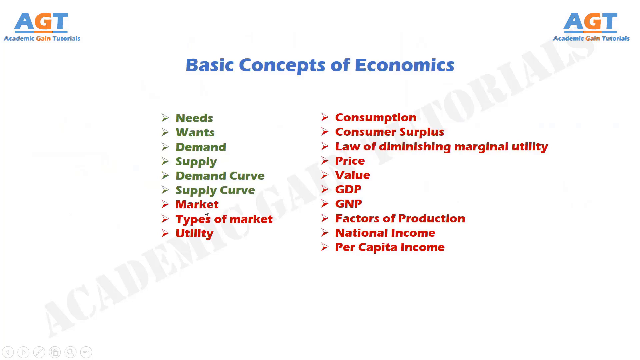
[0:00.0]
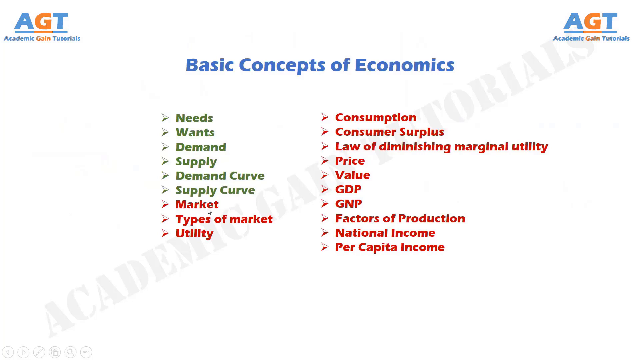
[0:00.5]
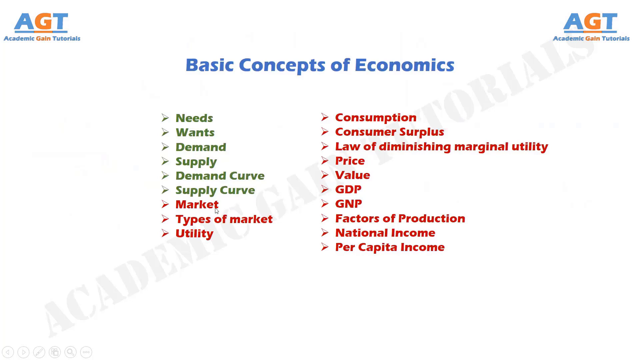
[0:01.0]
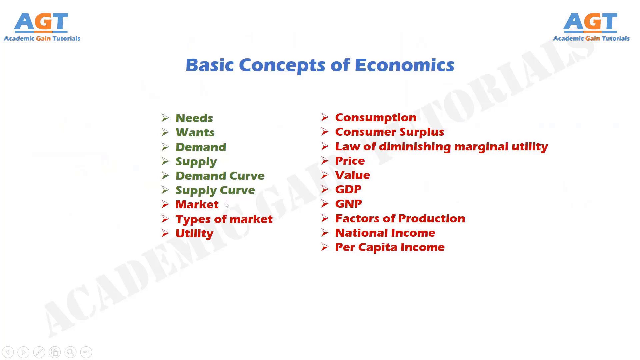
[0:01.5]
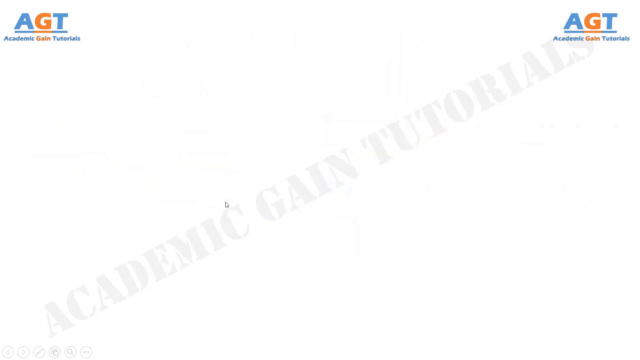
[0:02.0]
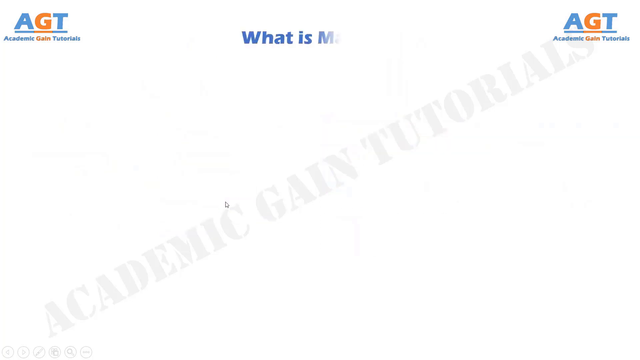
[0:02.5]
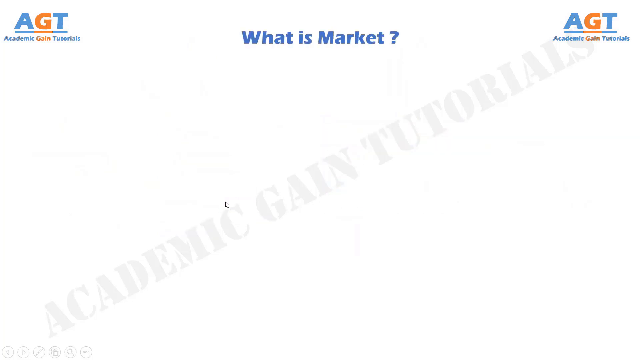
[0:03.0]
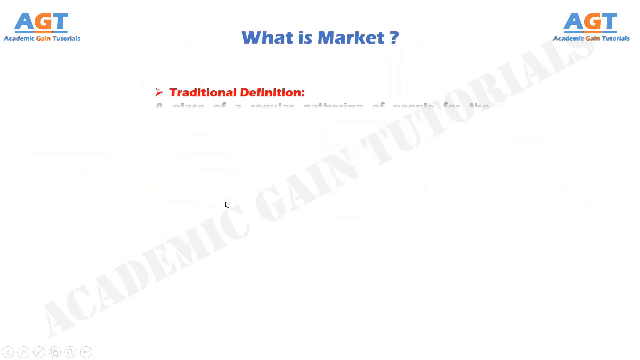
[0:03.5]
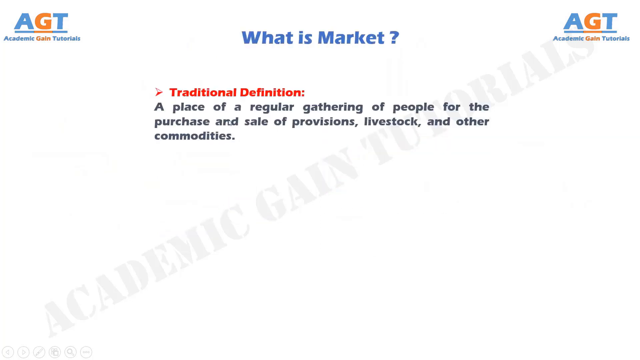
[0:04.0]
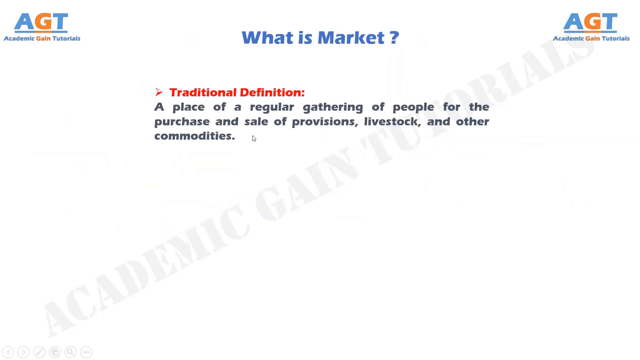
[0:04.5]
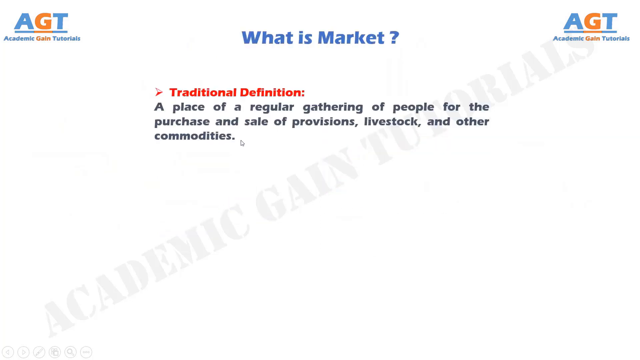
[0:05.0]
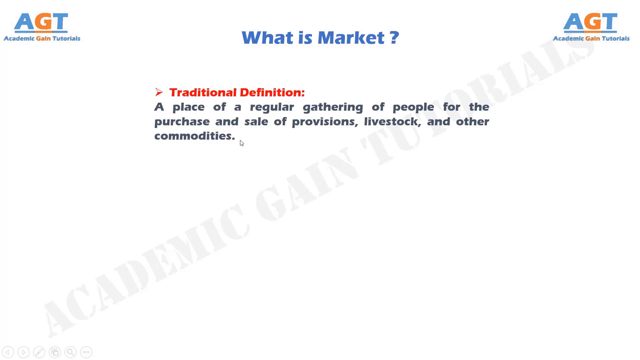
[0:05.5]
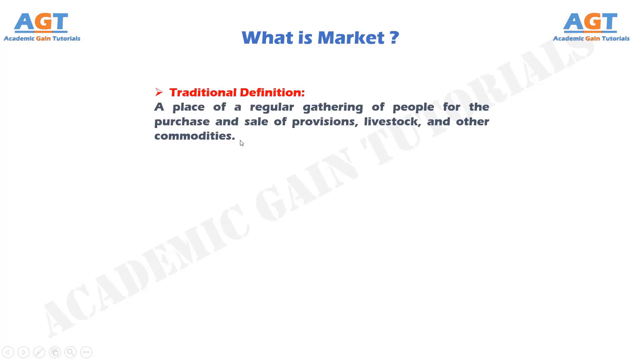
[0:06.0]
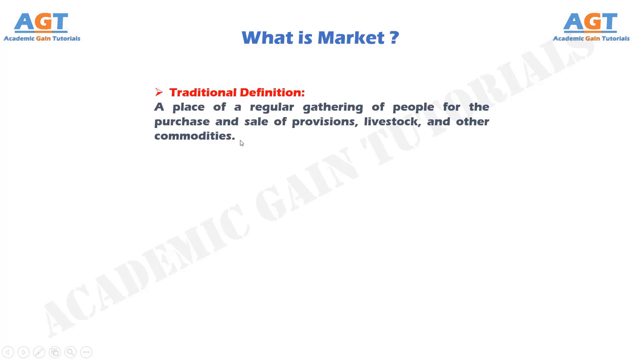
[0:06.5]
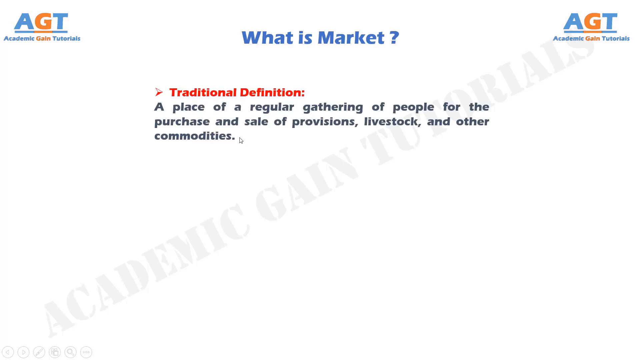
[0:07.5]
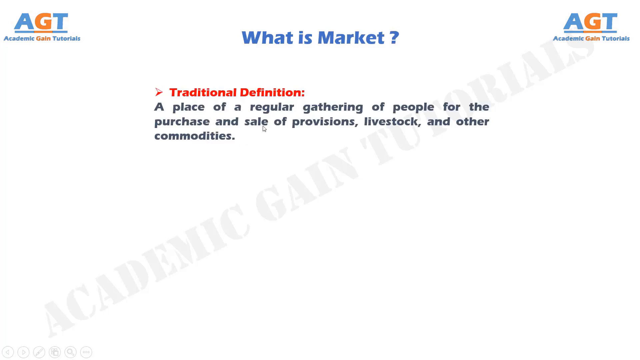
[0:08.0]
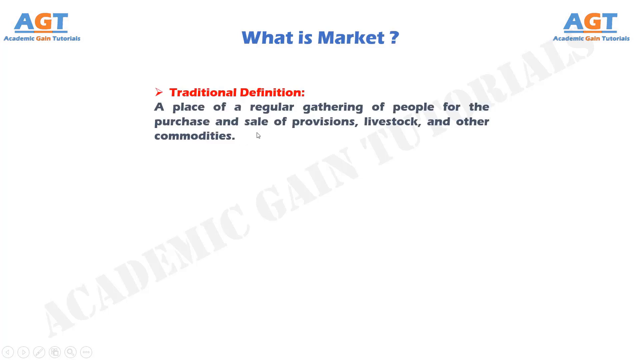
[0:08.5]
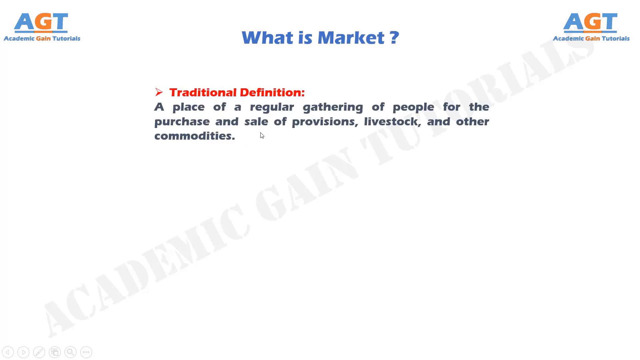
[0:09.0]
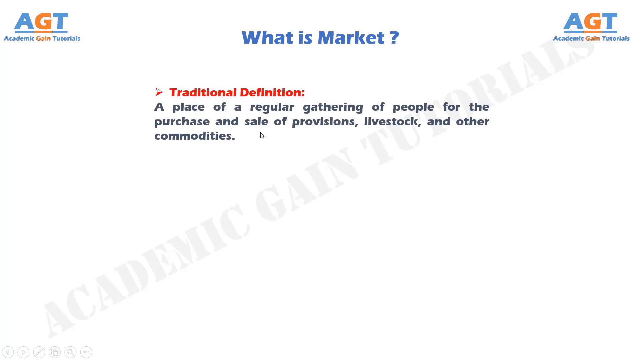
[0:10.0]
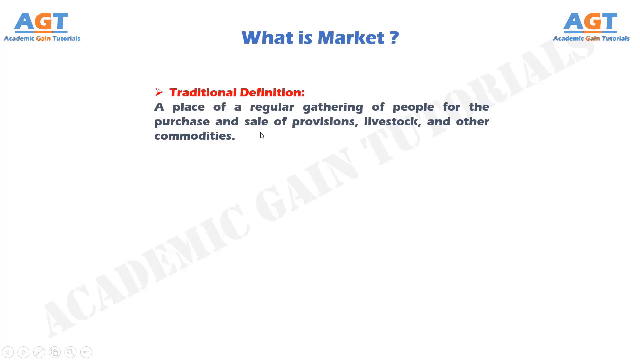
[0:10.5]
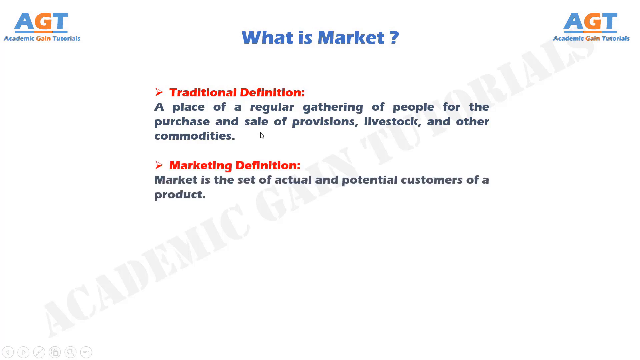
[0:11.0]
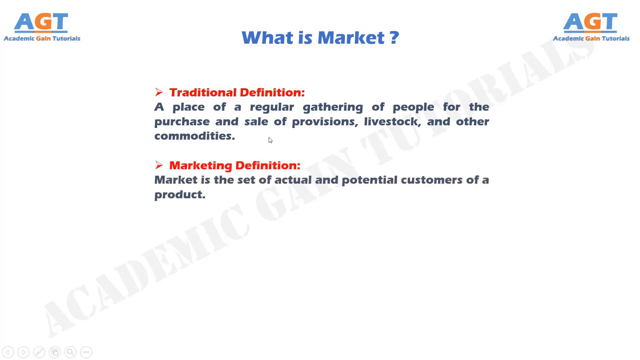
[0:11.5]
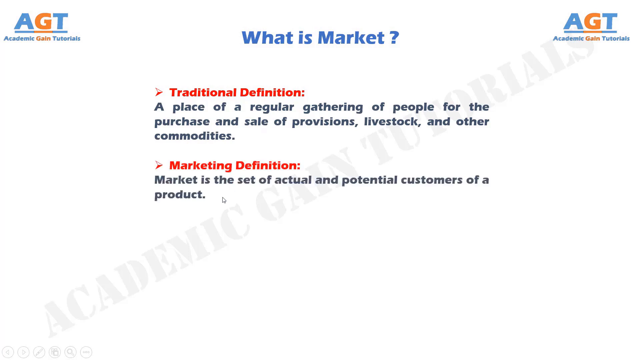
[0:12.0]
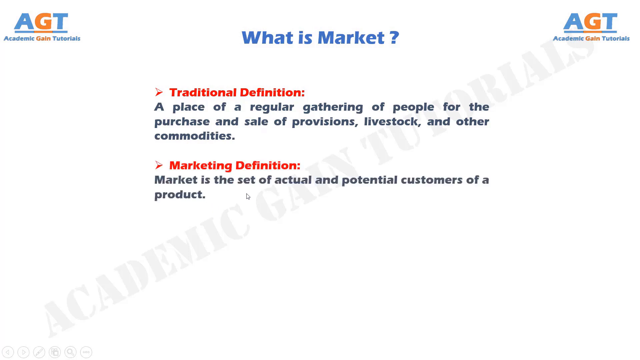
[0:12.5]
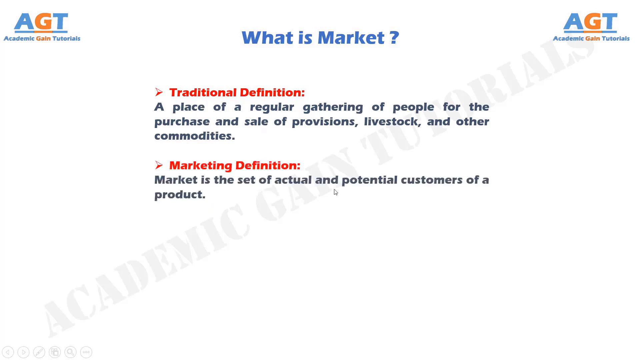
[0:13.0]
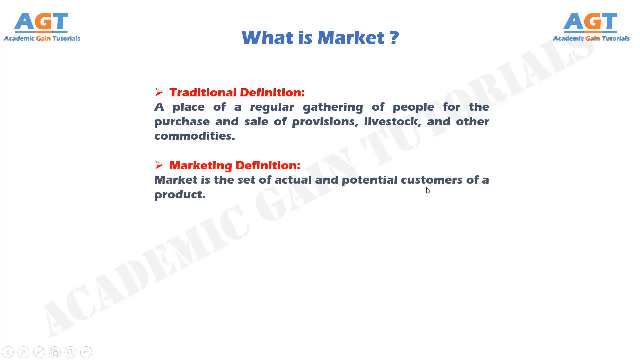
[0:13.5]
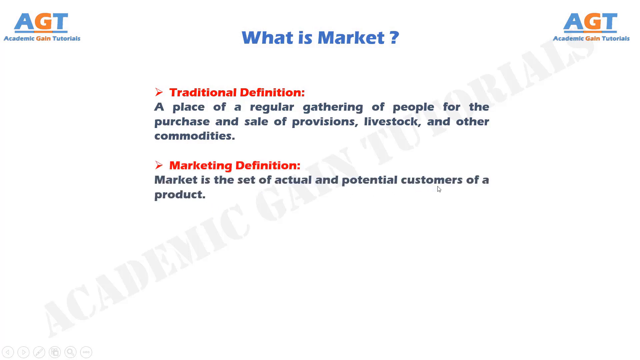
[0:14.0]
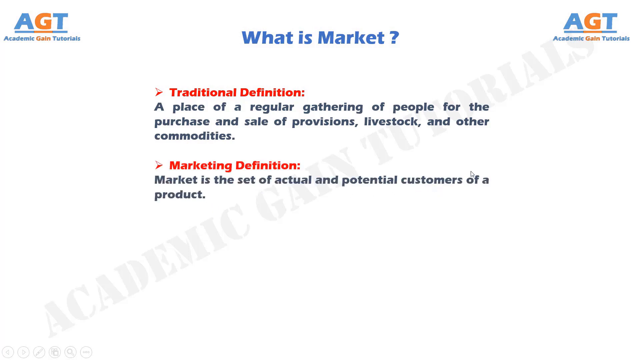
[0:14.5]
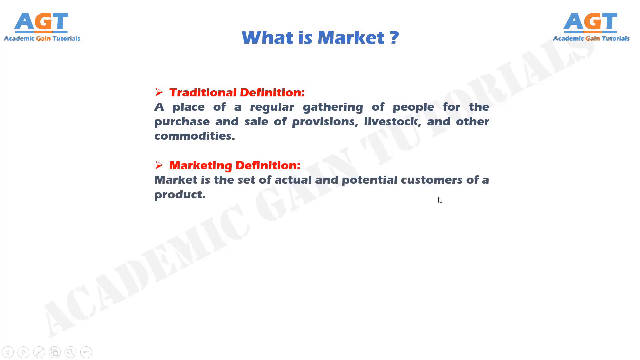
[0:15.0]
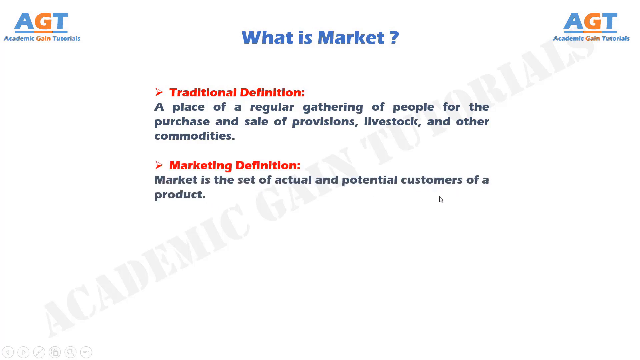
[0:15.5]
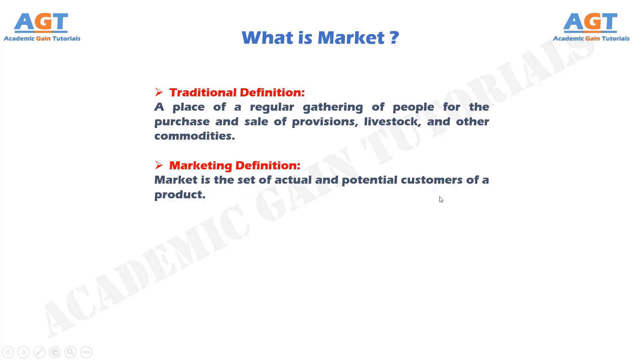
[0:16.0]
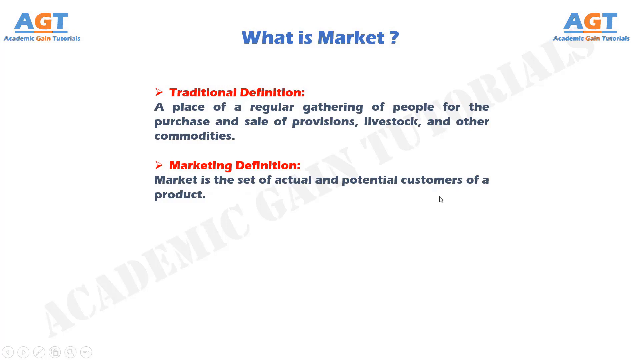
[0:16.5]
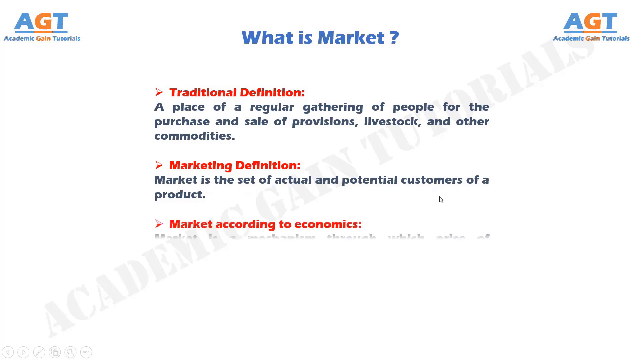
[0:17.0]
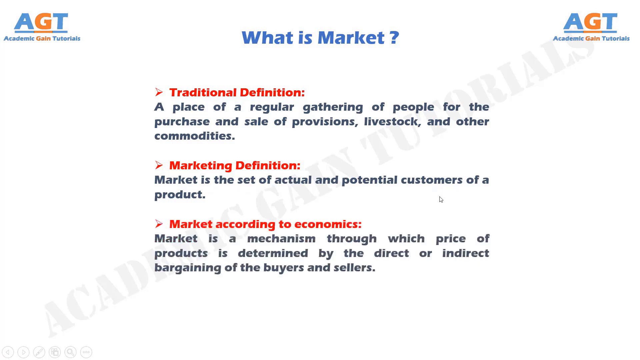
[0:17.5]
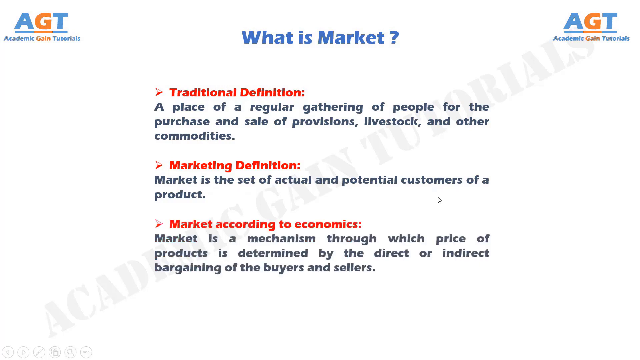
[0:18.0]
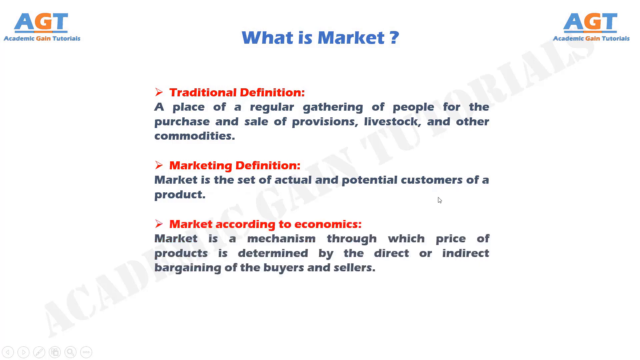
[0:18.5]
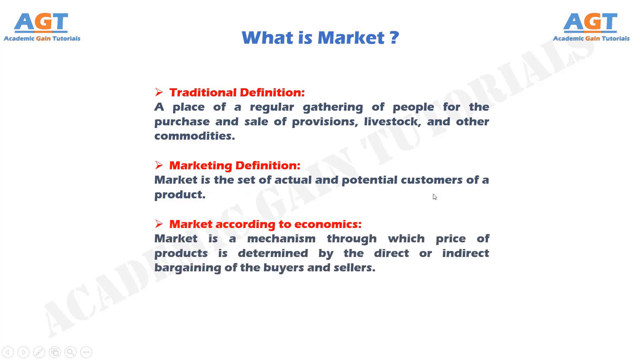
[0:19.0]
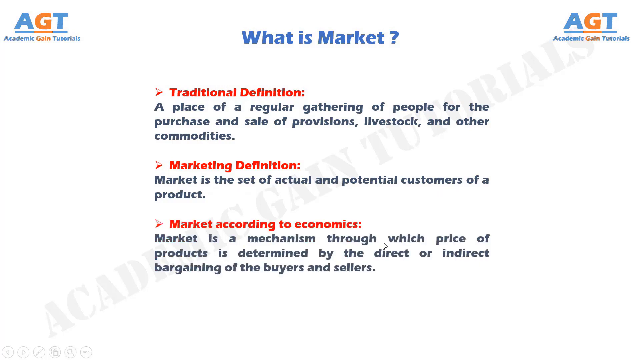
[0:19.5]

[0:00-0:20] A mostly white background appears with a logo for academic gain tutorials in the top left and top right. A list of basic concepts of economics is shown, such as consumption, GDP, value, needs, and wants; the first six are in green, while the rest are in red. The cursor on the computer screen highlights market, and text appears that says "what is market?" A definition of market follows: a place of gathering for people to purchase provisions, livestock, and commodities. Then a marketing definition of the word is given, defining it as a set of actual and potential customers. The cursor seems to point to and highlight specific words in the definition, as if for emphasis. One more definition appears, the market according to economics: a mechanism through which price of products is determined, through the direct or indirect bargaining of the buyers and sellers.